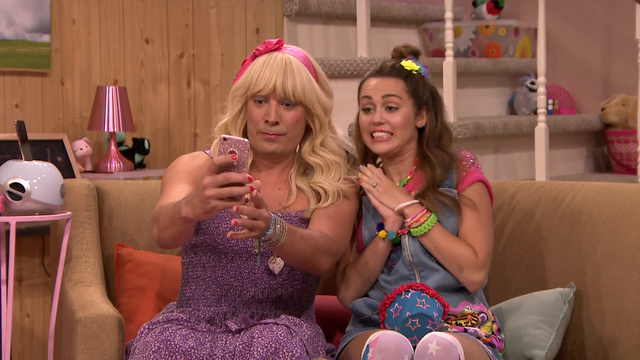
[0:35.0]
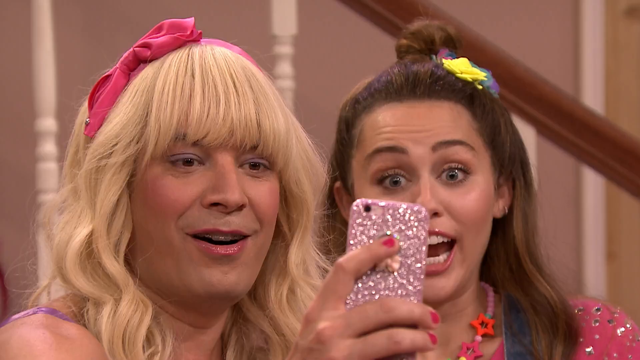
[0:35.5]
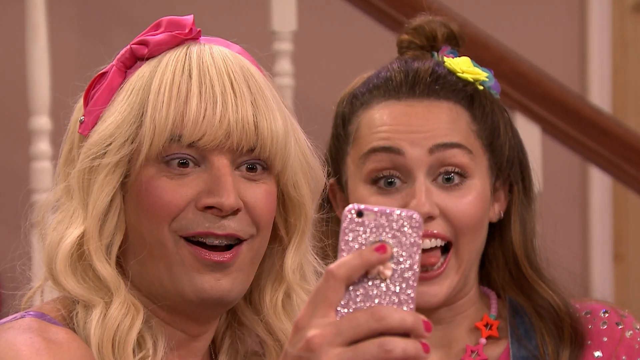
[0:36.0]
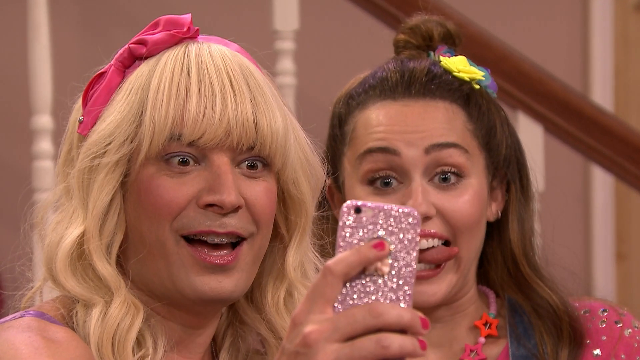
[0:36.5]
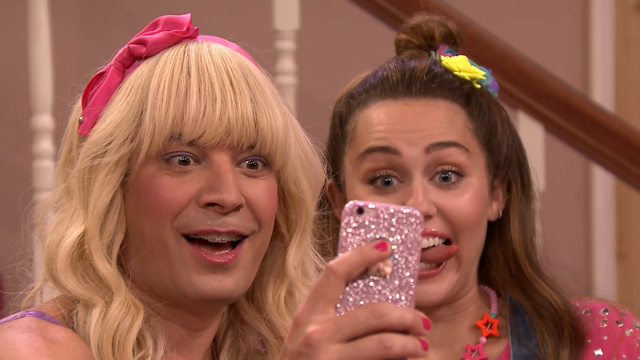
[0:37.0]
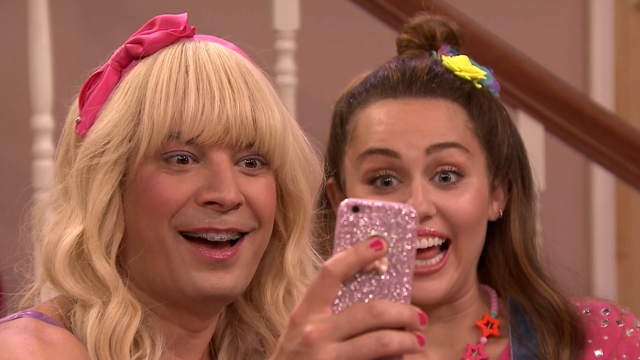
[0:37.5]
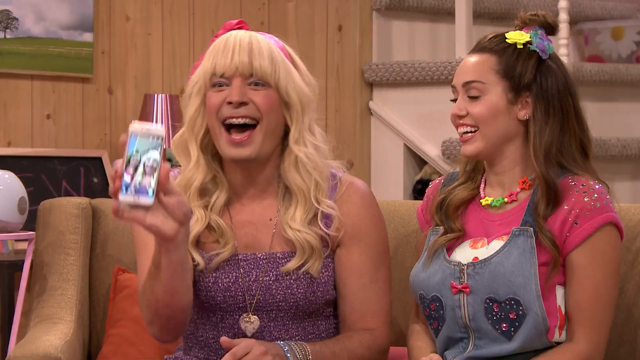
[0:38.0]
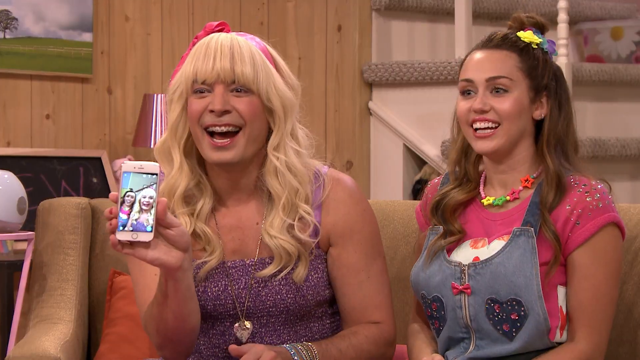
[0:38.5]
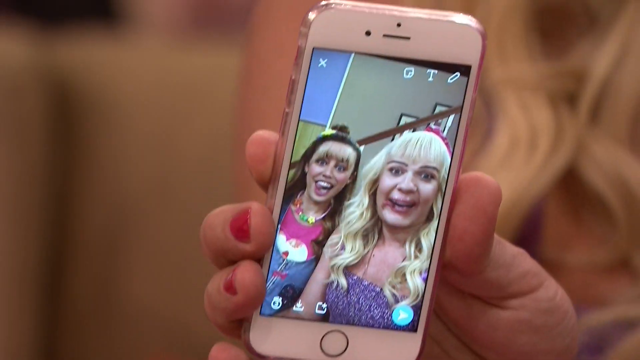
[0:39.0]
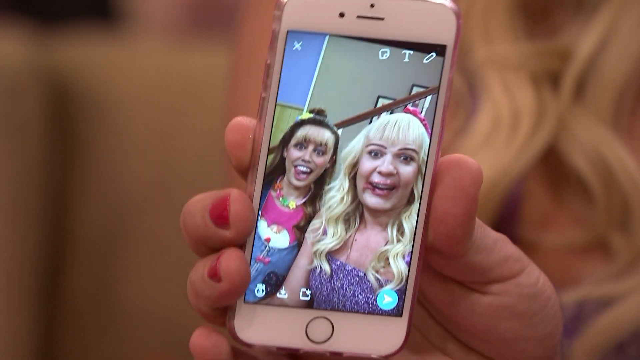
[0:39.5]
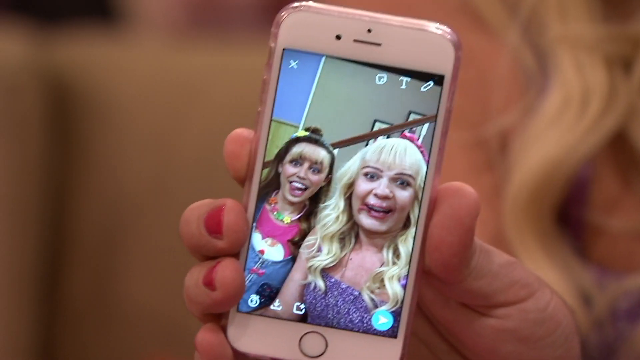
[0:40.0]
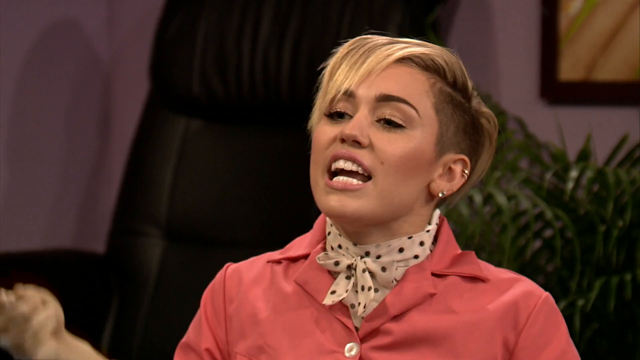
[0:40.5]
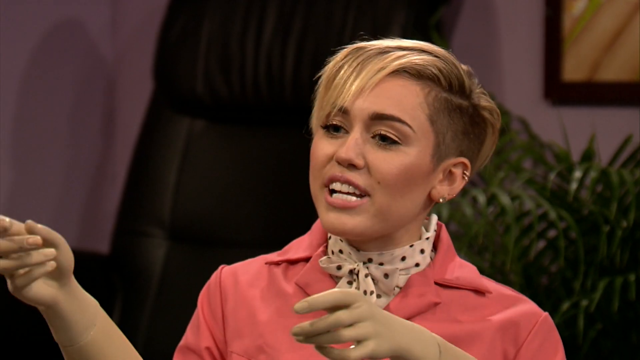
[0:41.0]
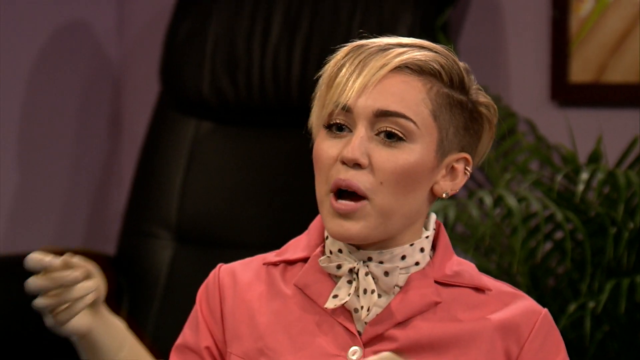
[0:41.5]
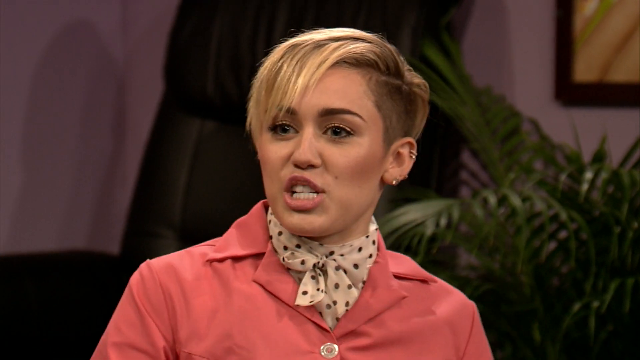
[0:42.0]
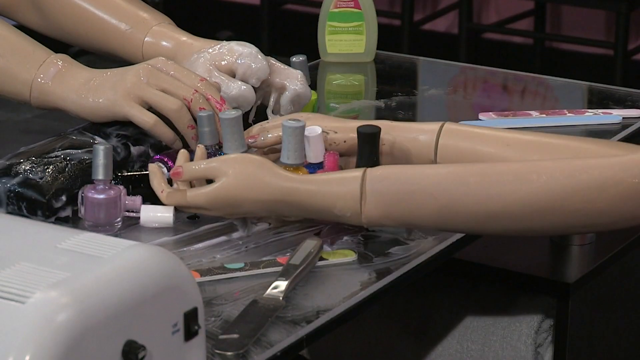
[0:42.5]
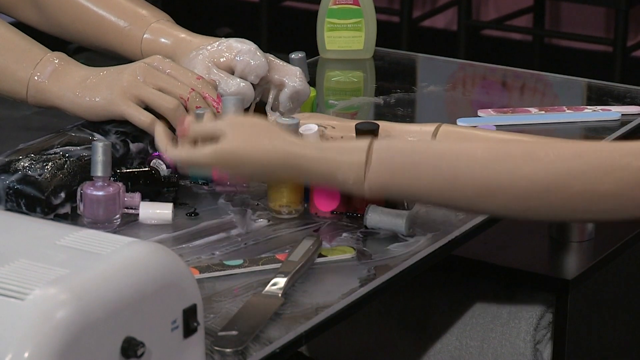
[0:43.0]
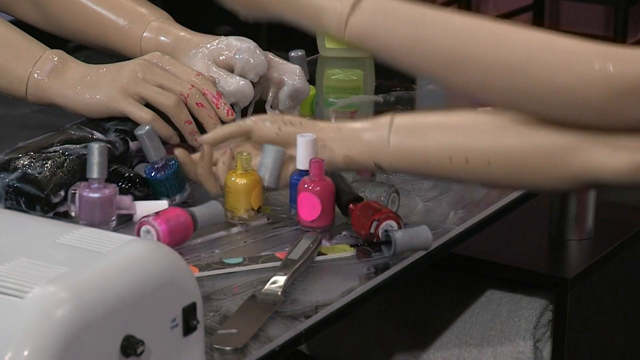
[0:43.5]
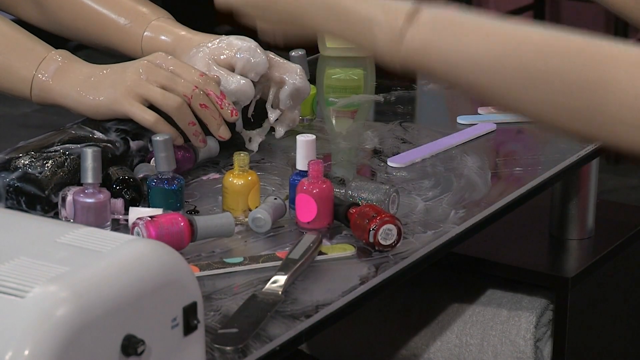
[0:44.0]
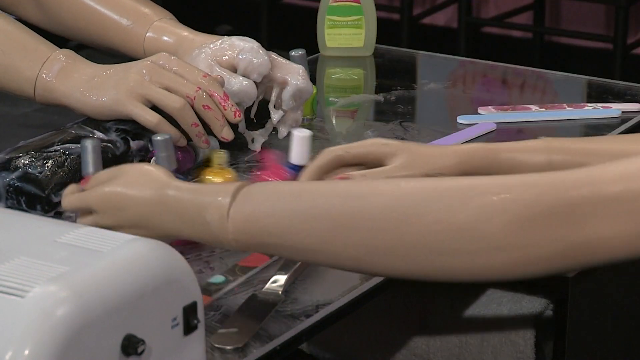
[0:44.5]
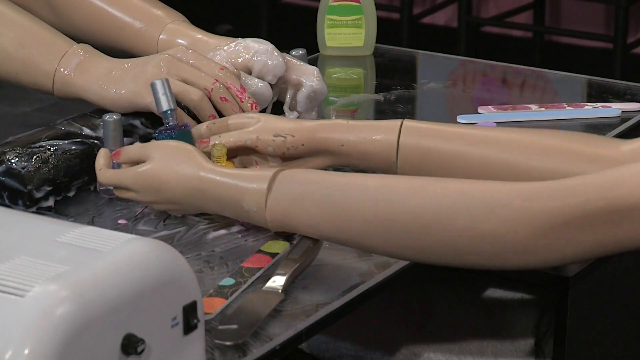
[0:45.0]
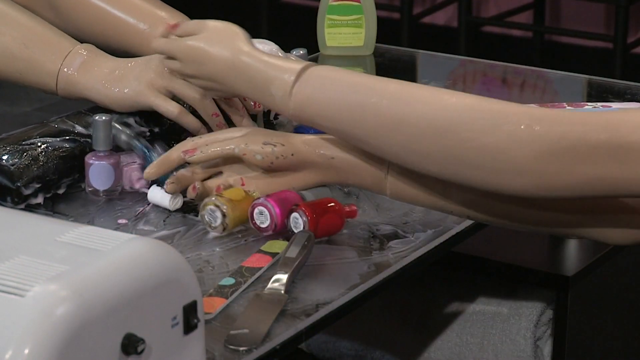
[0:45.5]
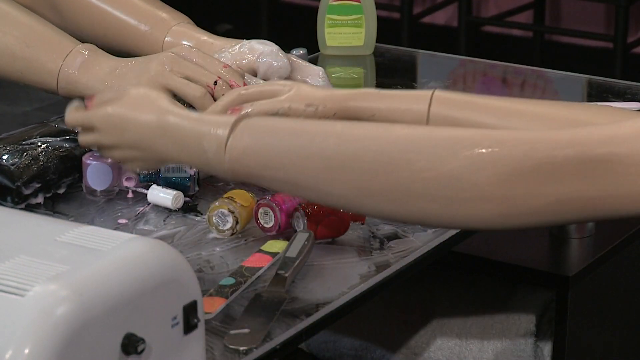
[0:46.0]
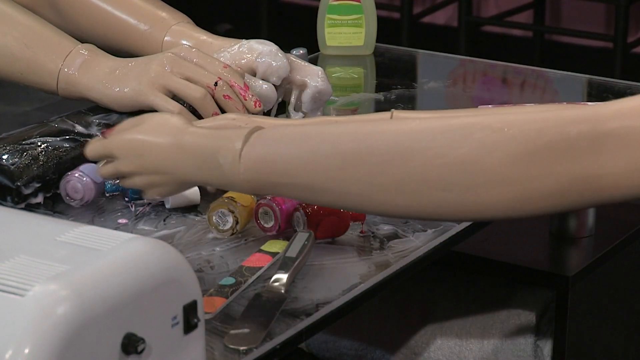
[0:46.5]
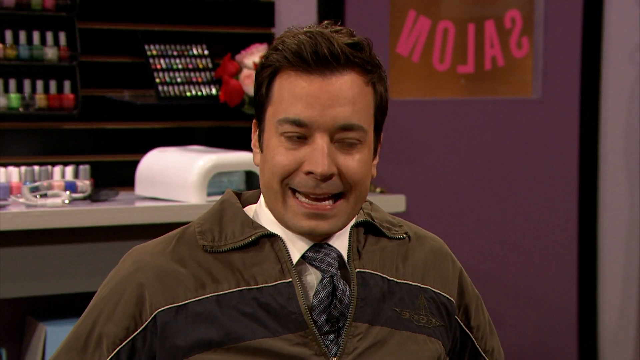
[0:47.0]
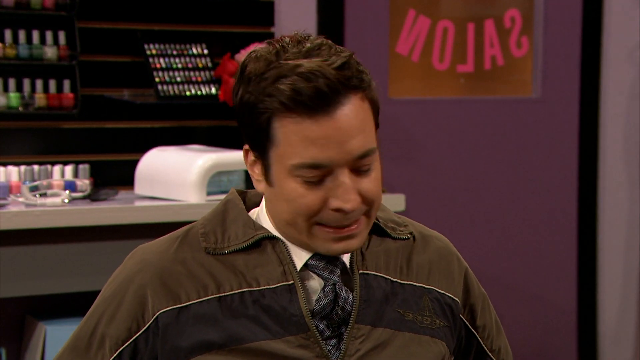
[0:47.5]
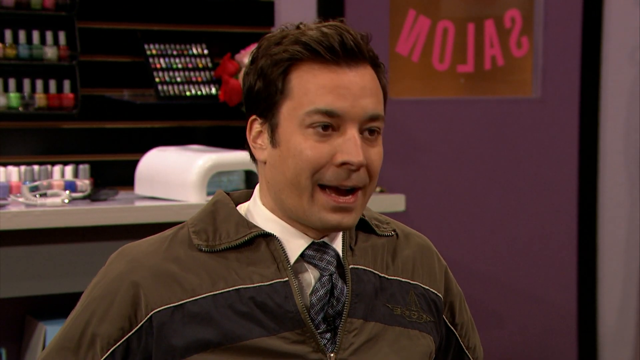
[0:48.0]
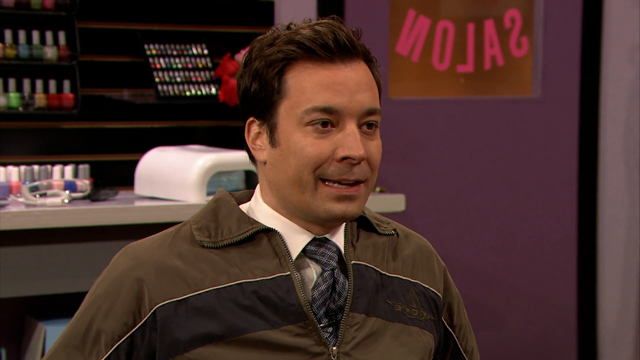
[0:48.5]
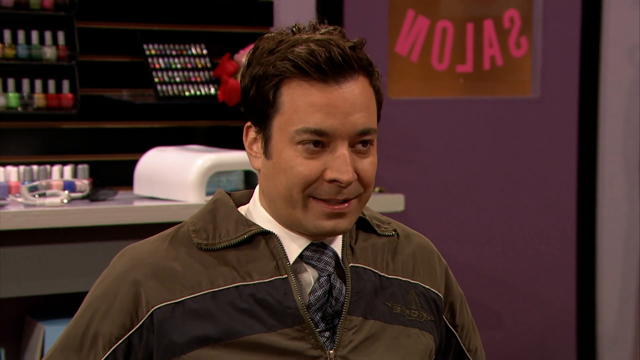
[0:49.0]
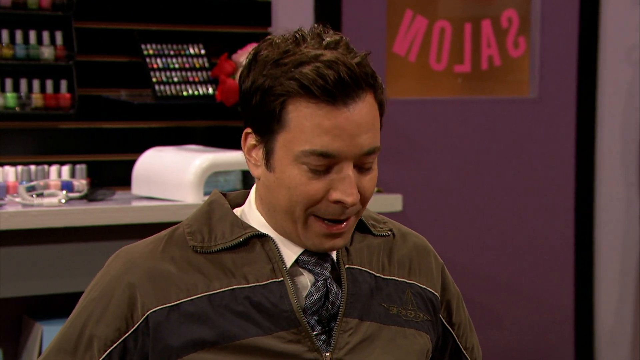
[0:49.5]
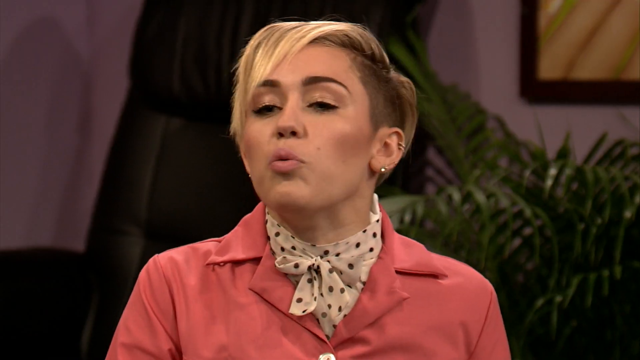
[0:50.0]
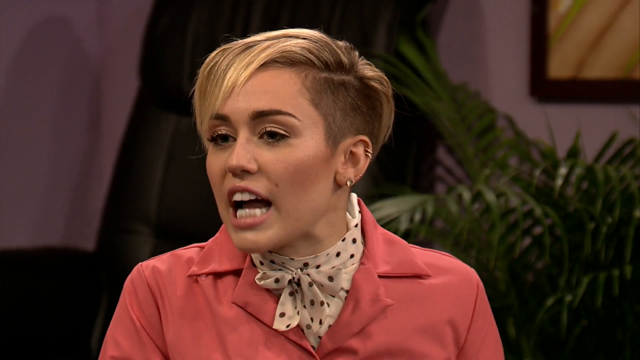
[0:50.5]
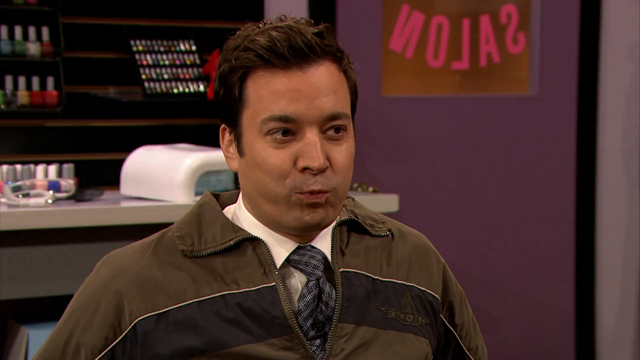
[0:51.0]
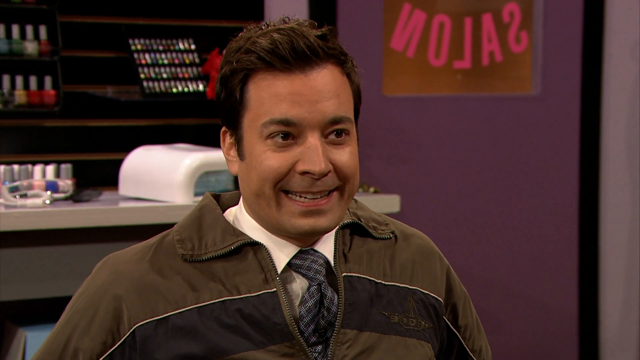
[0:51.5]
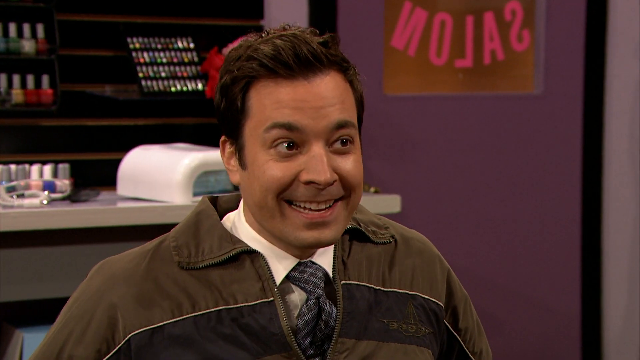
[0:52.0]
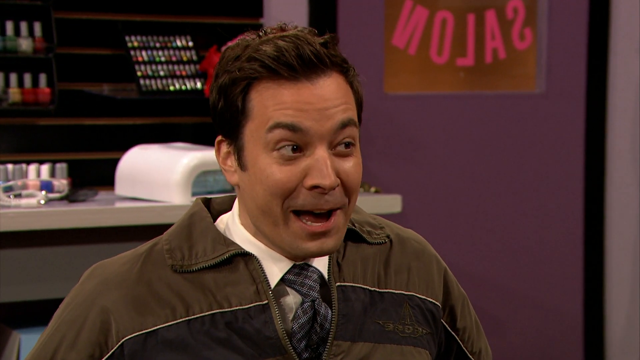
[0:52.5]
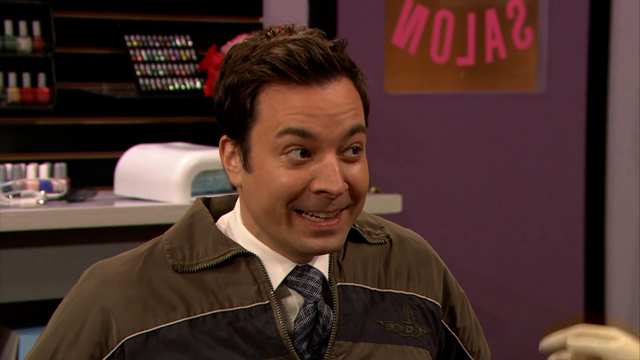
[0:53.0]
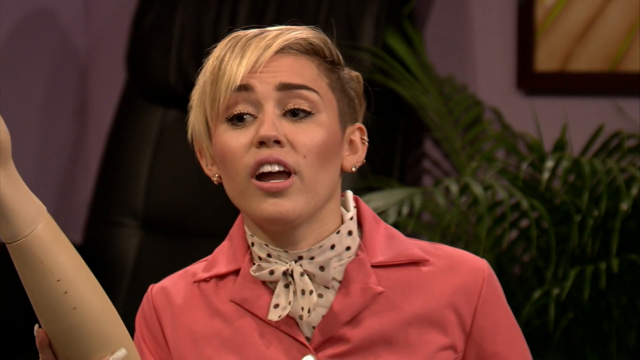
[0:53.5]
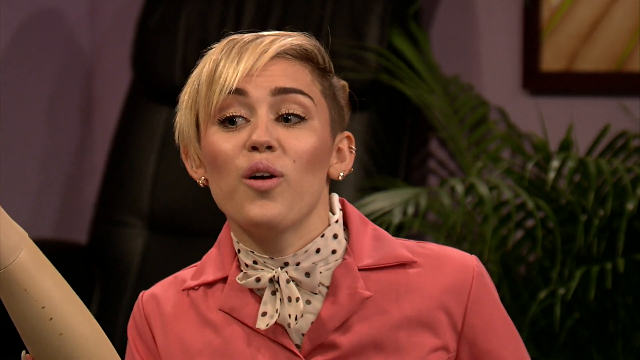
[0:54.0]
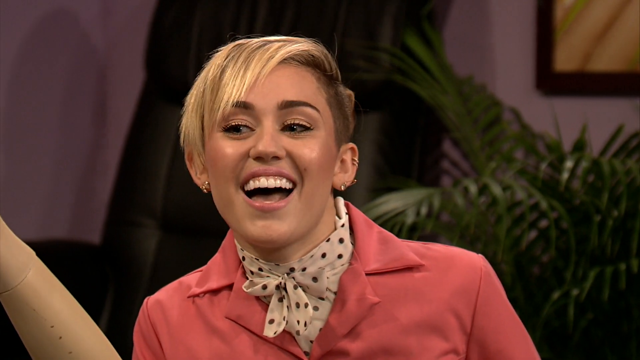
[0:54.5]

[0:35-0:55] Miley and Jimmy sit on a couch, he on the left and she on the right. He still wears the purple dress, with blue hair and a little pink ribbon over the top. The couch is gray or brown. The walls are wood panel halfway up and light blue from there to the top, and stairs are visible in the back. Miley has her hair pulled up into a ponytail on top and a yellow beret in her hair, and wears a pink shirt with what looks like Hello Kitty and blue overalls. They take a selfie, and she smiles and sticks her tongue out at the camera. Jimmy shows the phone to the camera. The video cuts to Miley in a pink jacket talking. Plastic mannequin arms reach out over a table with nail polish, some coming in from the left side as well; they all move to the center, knocking over a bunch of the items. The table has a glass top, and the items look to be nail polish with some nail polish remover at the top part. The video cuts to Jimmy talking, with a salon and more nail polish on the wall behind him, then to Miley, with a black chair, a plant and a purple wall behind her.